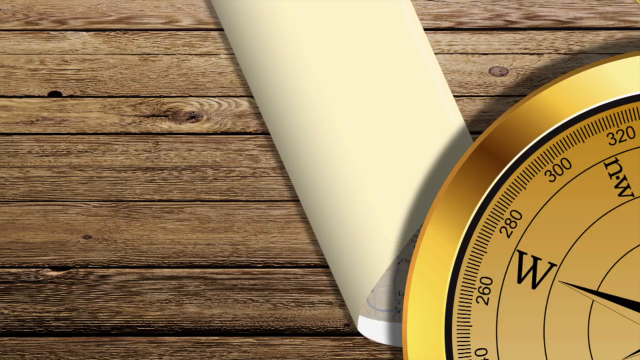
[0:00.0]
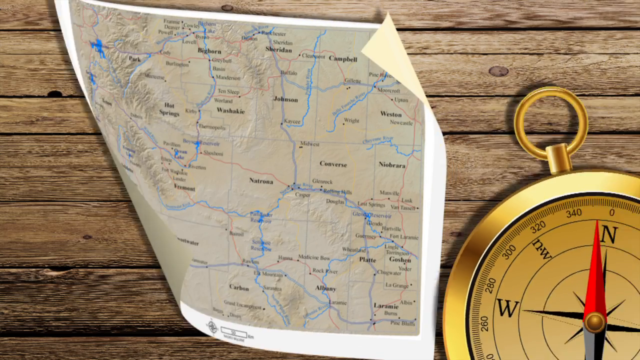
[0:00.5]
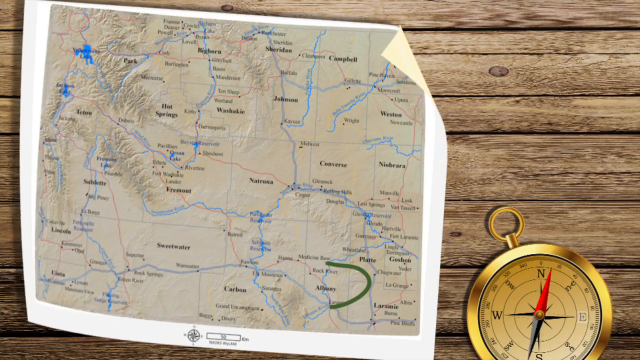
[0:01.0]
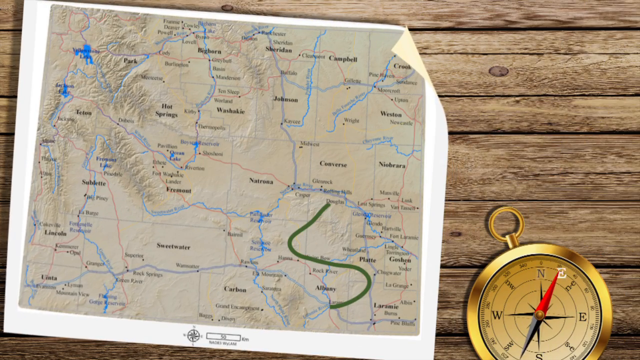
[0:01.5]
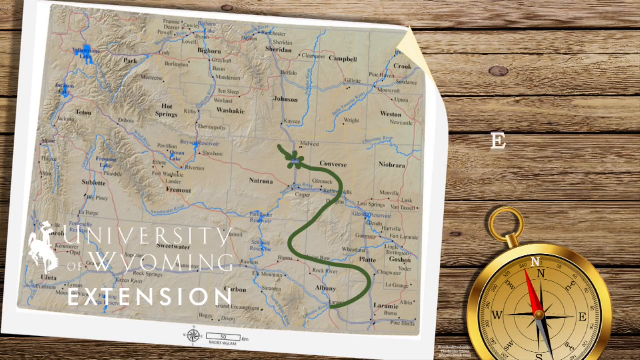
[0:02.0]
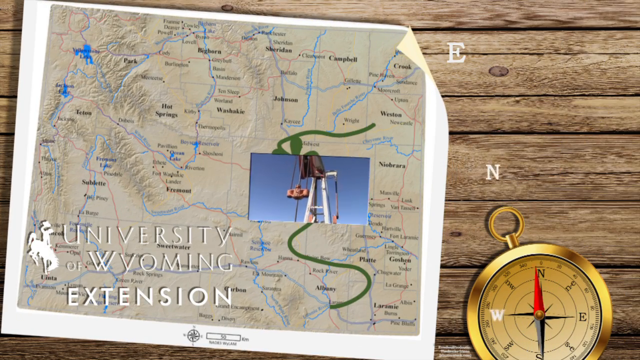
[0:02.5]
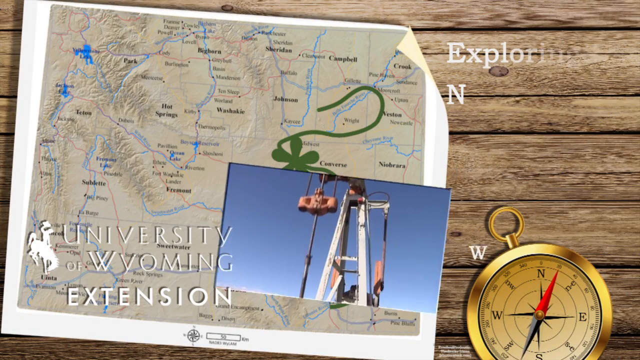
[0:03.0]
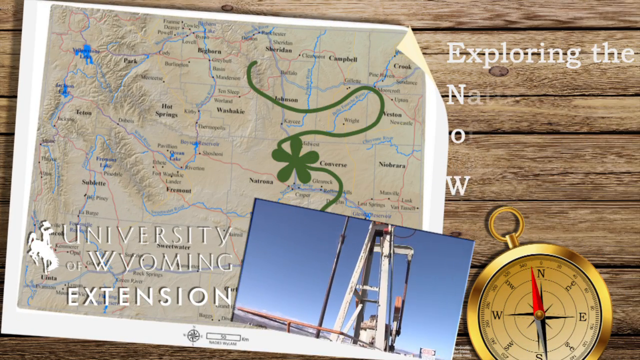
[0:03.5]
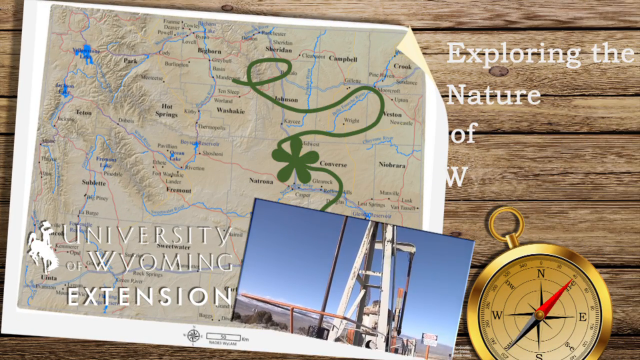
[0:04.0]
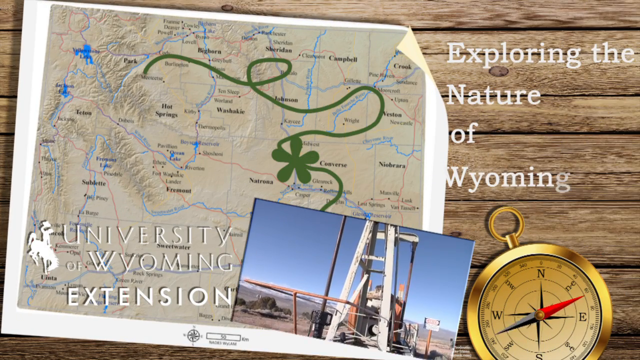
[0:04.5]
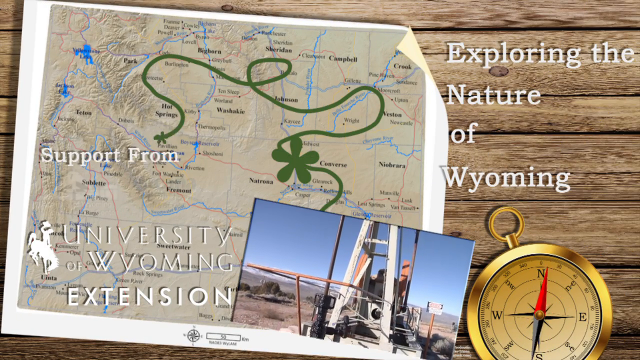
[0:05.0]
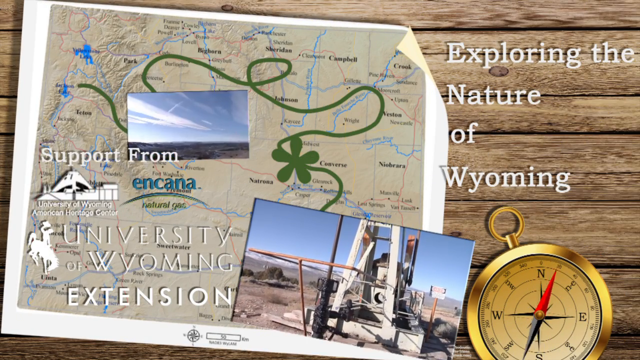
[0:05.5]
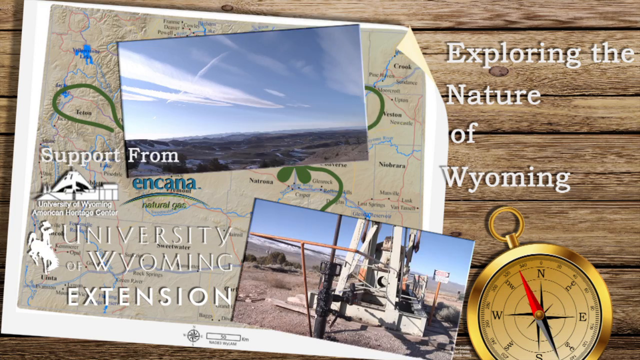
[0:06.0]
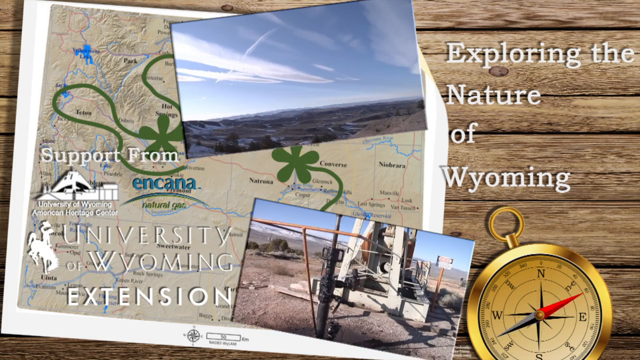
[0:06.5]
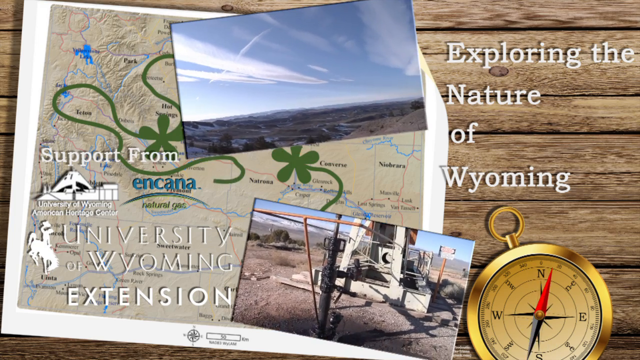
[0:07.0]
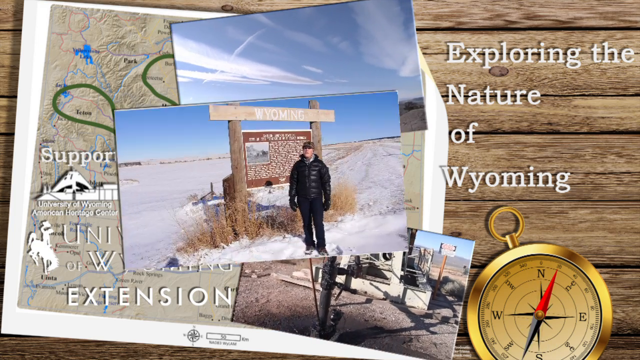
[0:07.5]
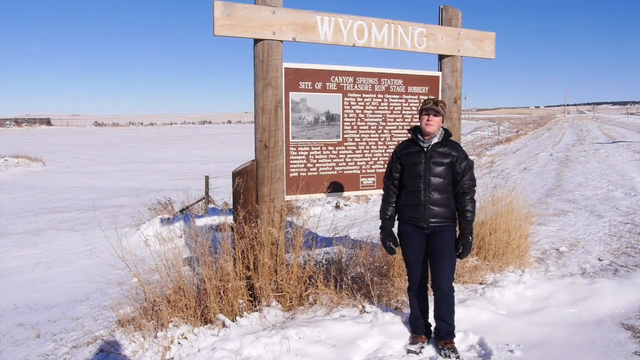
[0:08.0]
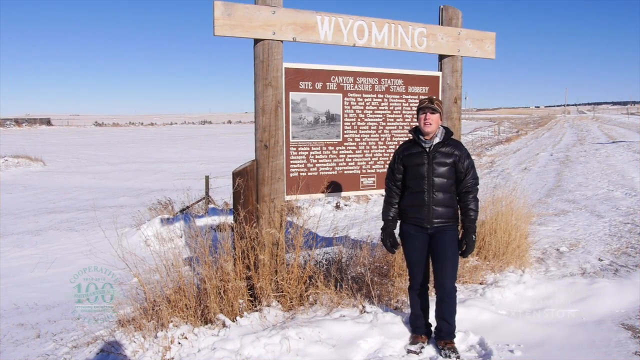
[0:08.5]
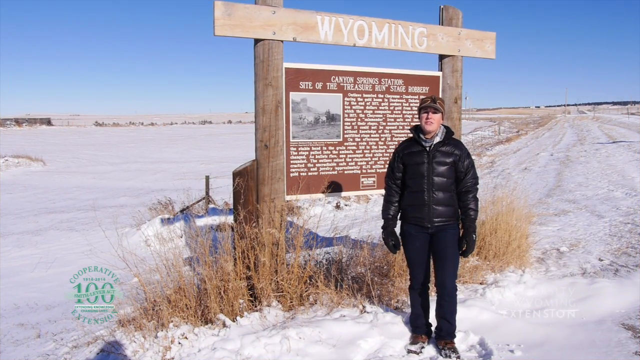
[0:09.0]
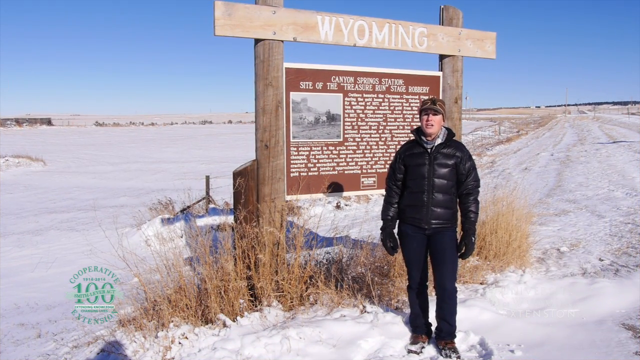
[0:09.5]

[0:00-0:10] The video opens on what almost looks like a picnic table with a map placed on top of it, apparently made of digital images, and a compass placed right next to the map. A green line seems to start toward the bottom of the map and moves upward; the images are kind of blurry, so they are hard to read. As the line goes up, a picture comes up, though what it shows cannot be made out. The green line continues all over the map and more pictures come up. Then a man appears in front of a sign in Wyoming. It is completely snowy, with snow all over the ground. The sign is held up by two fence poles, with a board across the top that says "Wyoming". The man stands out in front of it wearing all black, including a puffer jacket, and is dressed very warmly with gloves on his hands. He looks to be Caucasian and probably around 30.